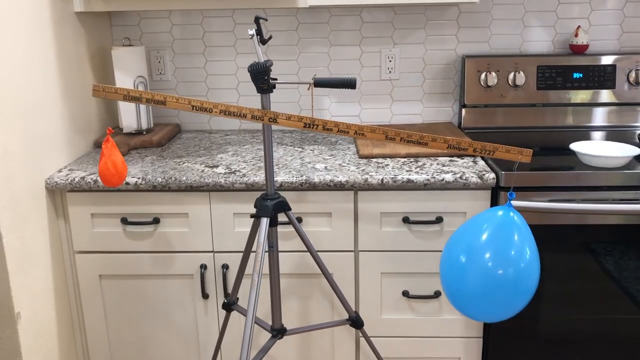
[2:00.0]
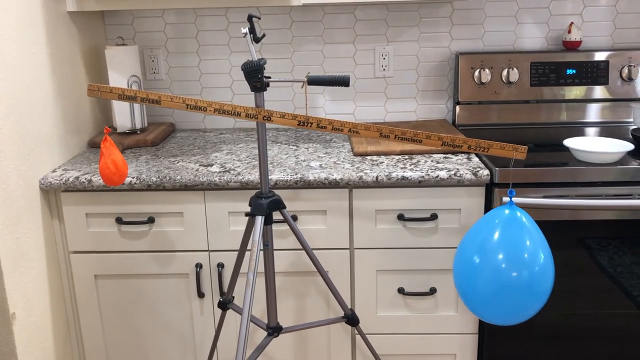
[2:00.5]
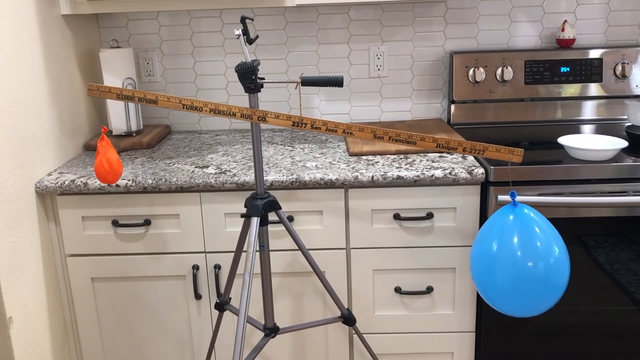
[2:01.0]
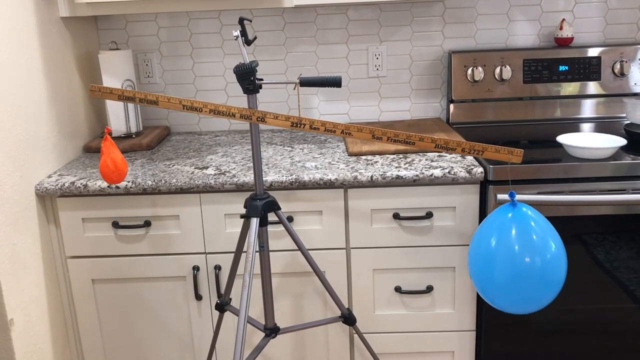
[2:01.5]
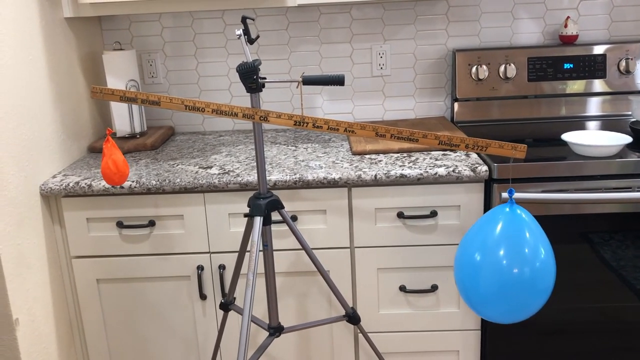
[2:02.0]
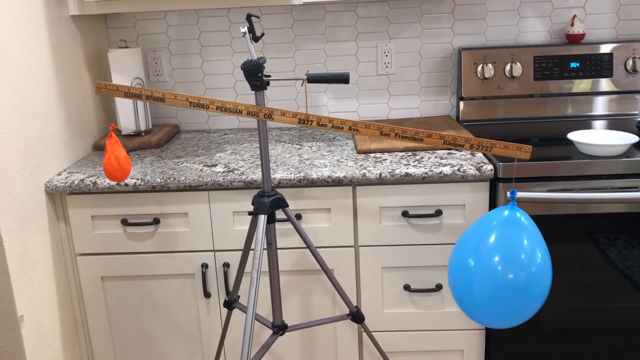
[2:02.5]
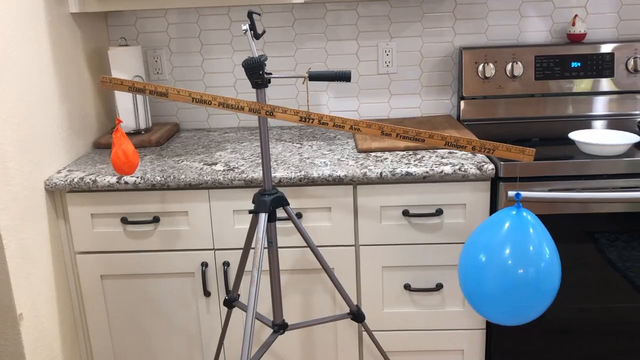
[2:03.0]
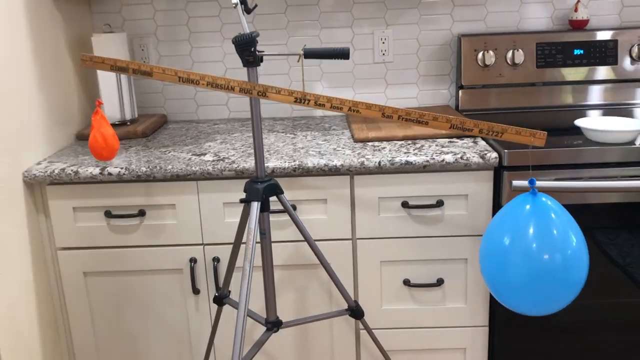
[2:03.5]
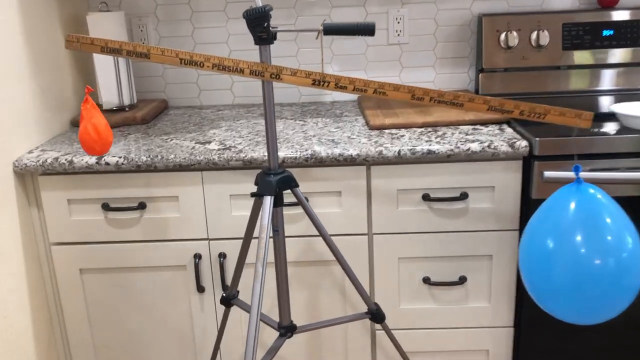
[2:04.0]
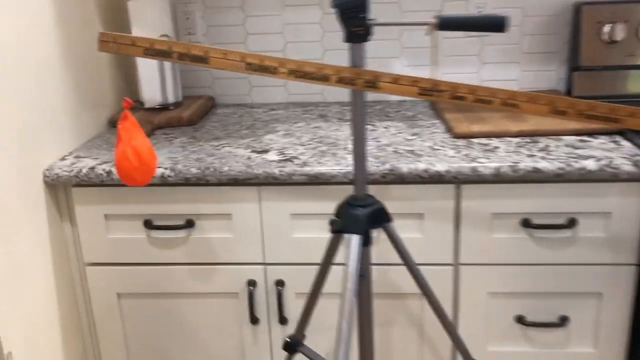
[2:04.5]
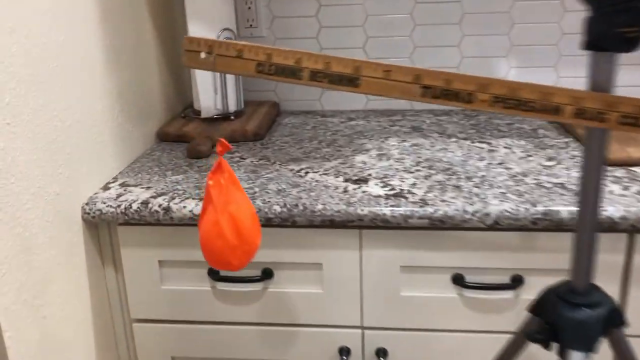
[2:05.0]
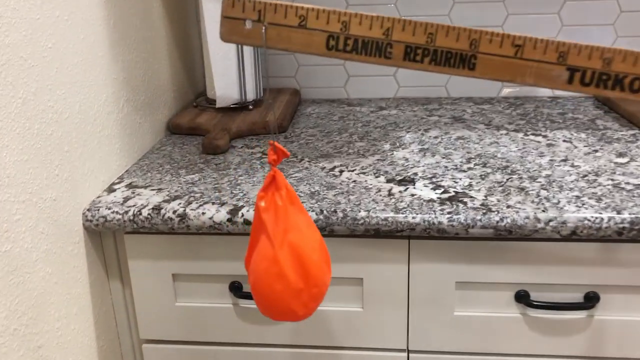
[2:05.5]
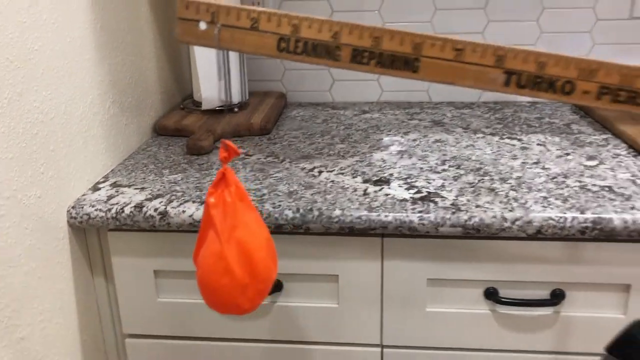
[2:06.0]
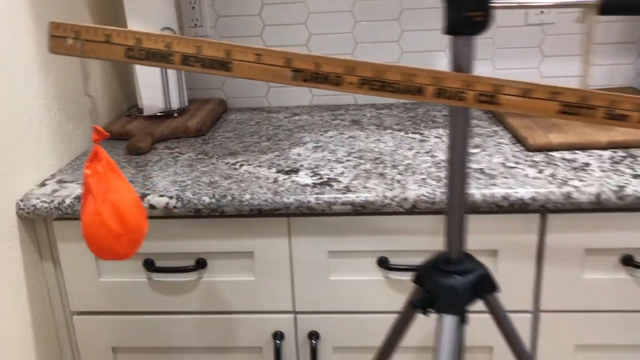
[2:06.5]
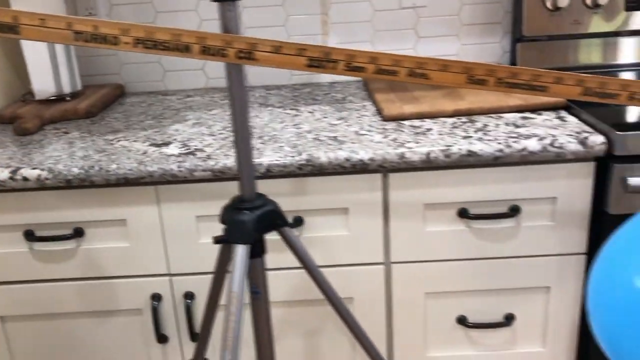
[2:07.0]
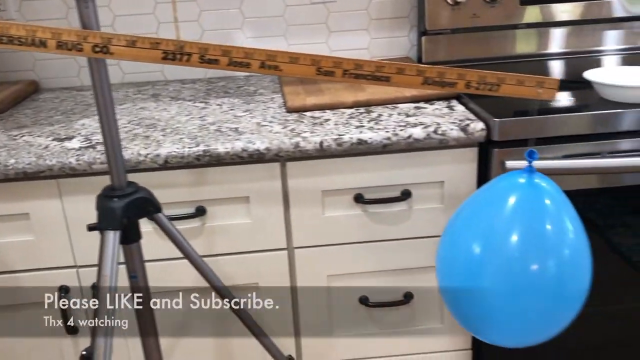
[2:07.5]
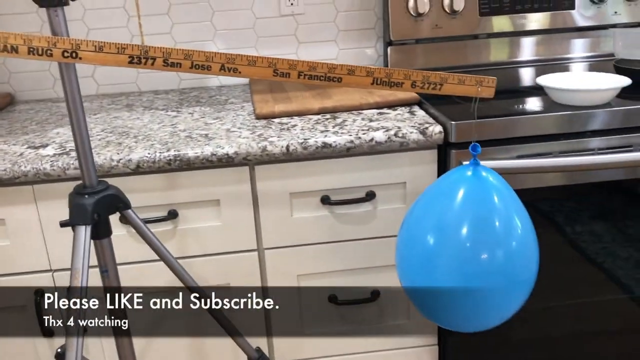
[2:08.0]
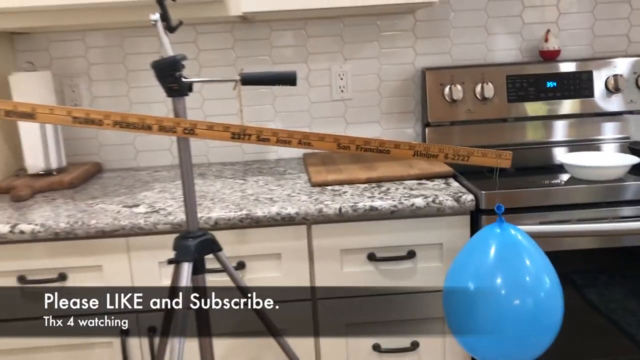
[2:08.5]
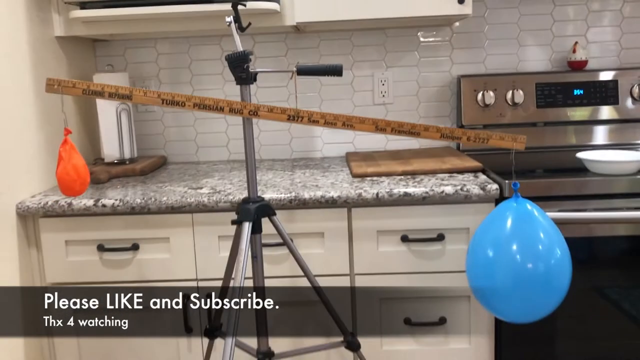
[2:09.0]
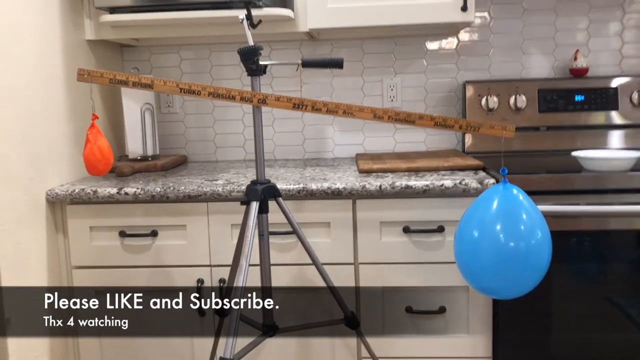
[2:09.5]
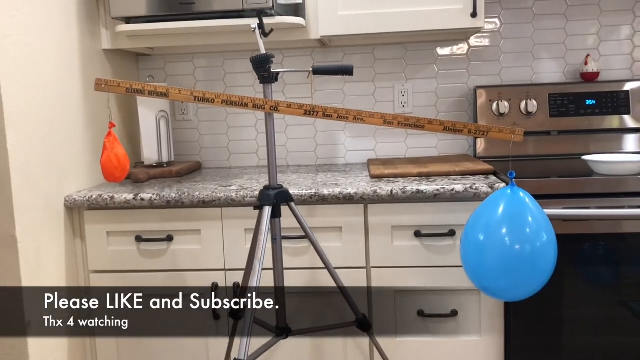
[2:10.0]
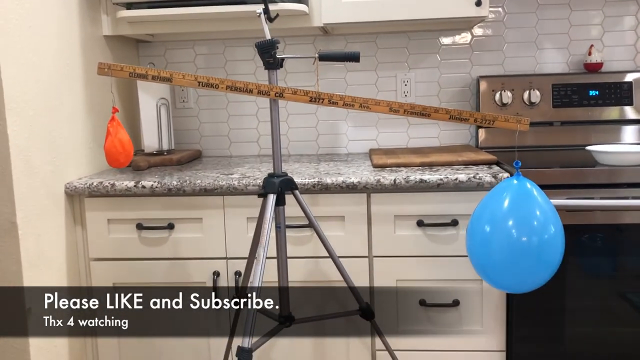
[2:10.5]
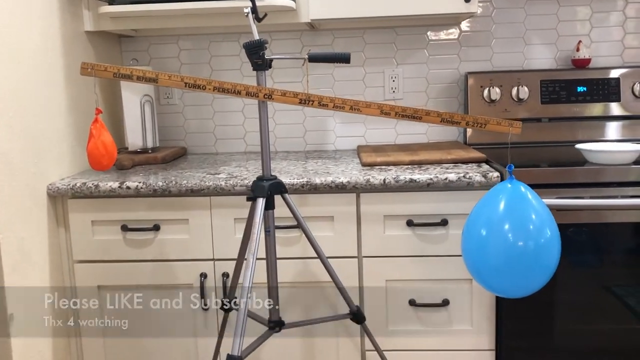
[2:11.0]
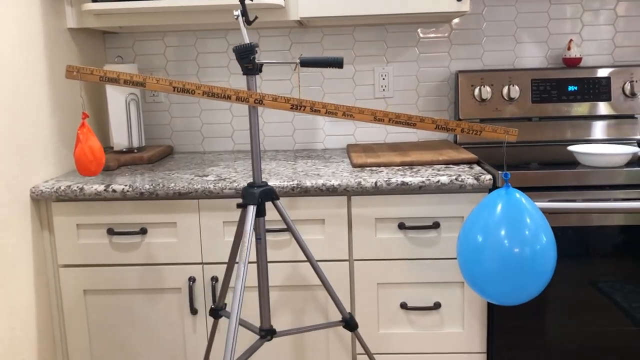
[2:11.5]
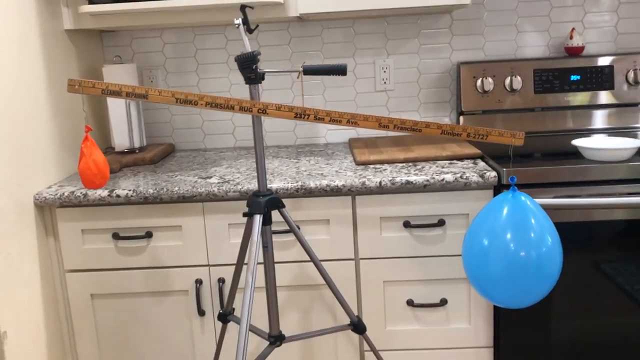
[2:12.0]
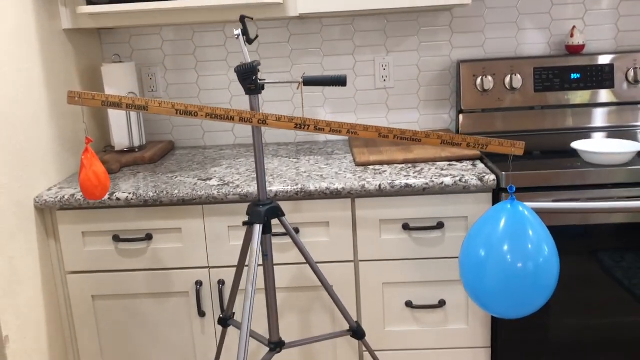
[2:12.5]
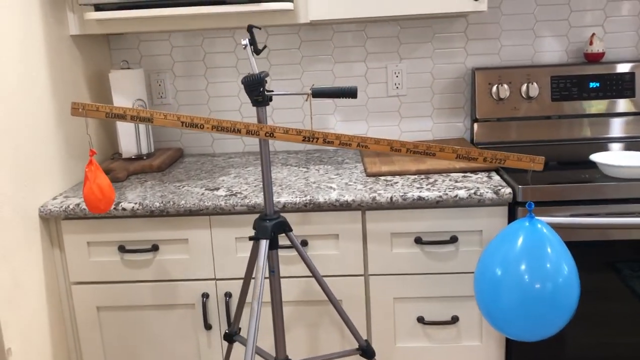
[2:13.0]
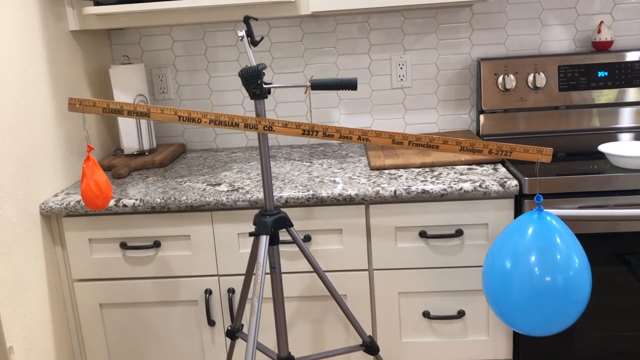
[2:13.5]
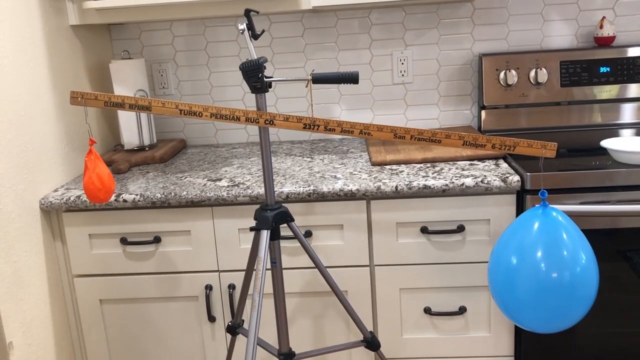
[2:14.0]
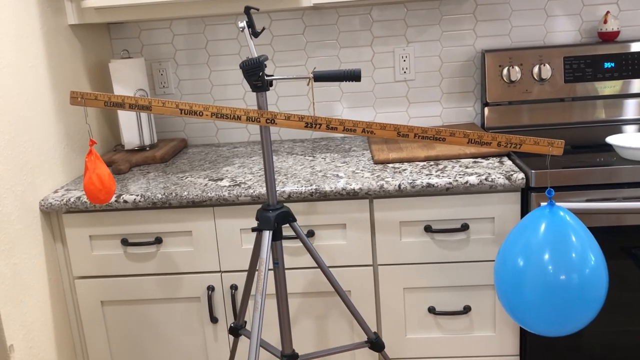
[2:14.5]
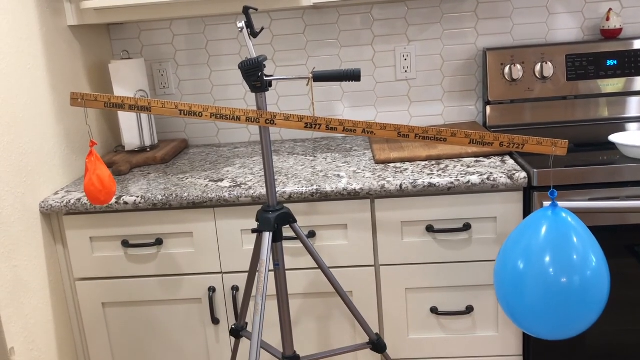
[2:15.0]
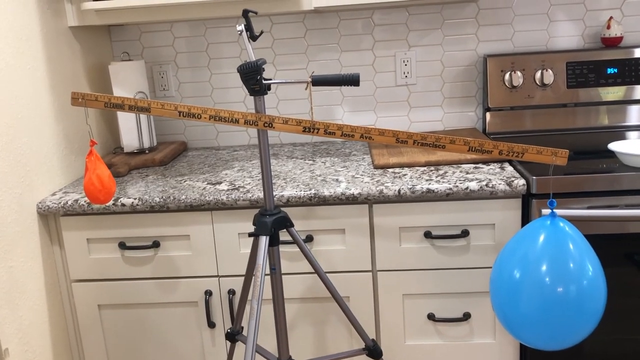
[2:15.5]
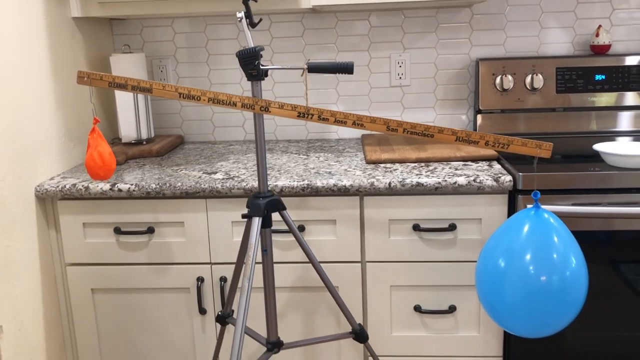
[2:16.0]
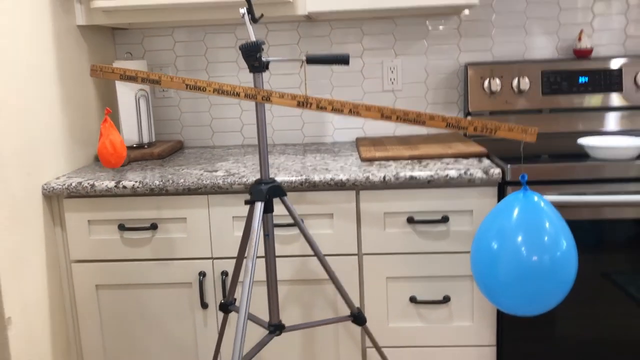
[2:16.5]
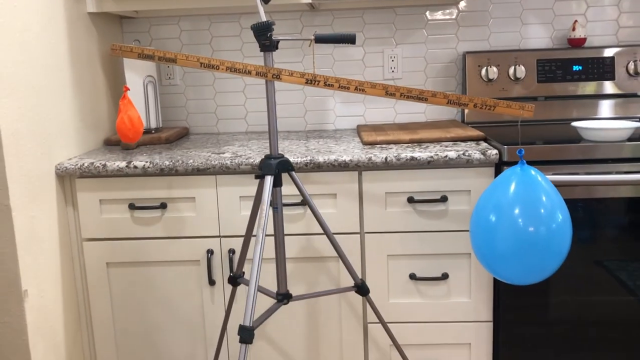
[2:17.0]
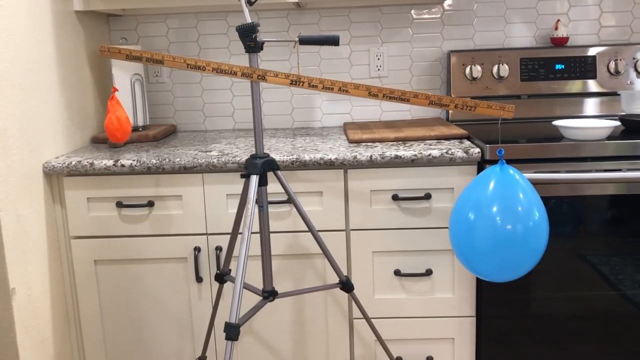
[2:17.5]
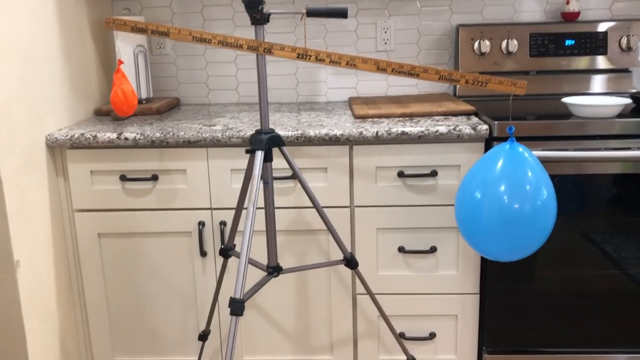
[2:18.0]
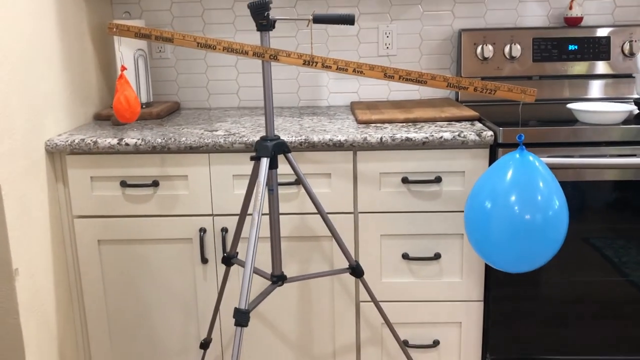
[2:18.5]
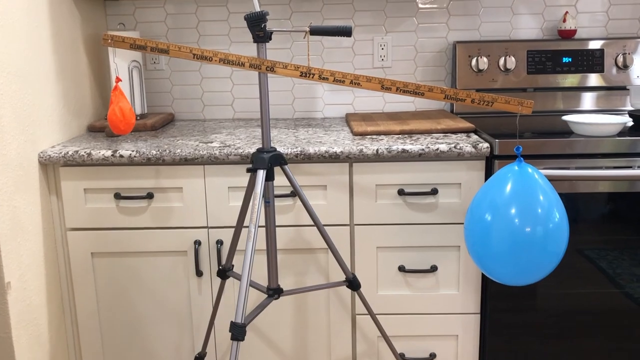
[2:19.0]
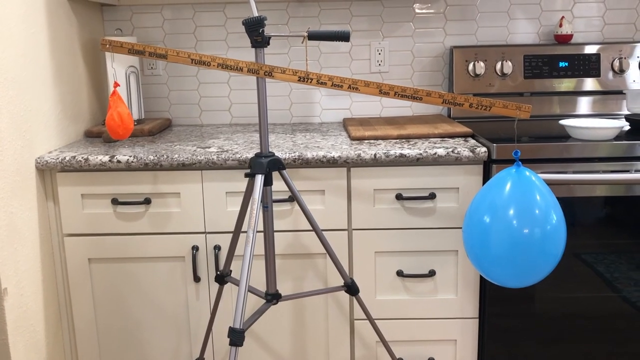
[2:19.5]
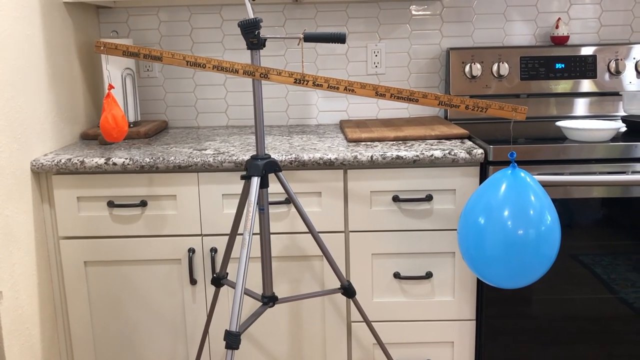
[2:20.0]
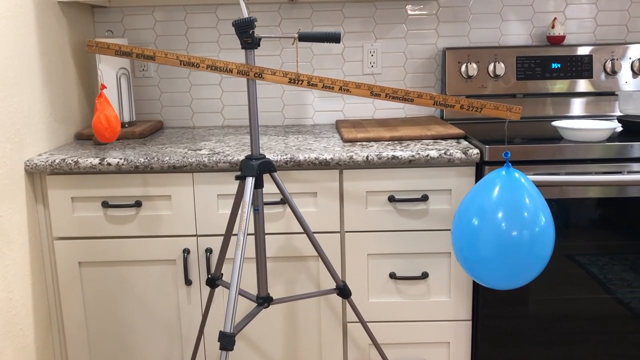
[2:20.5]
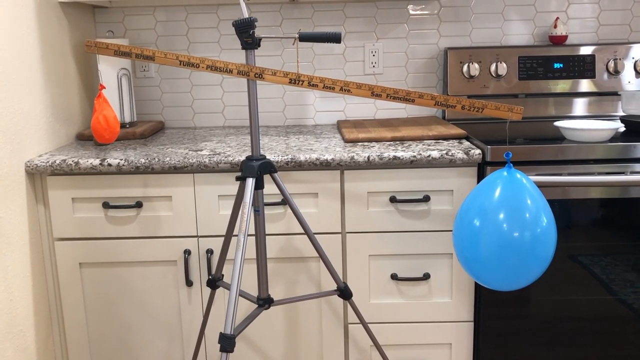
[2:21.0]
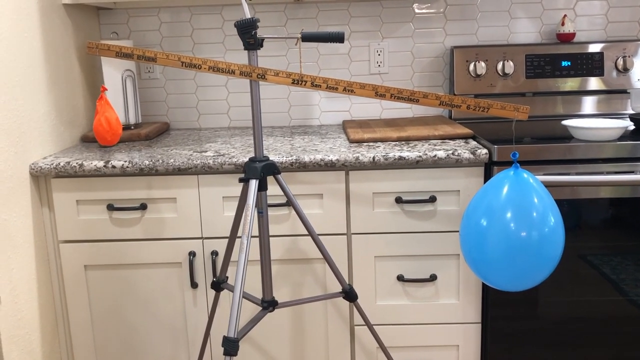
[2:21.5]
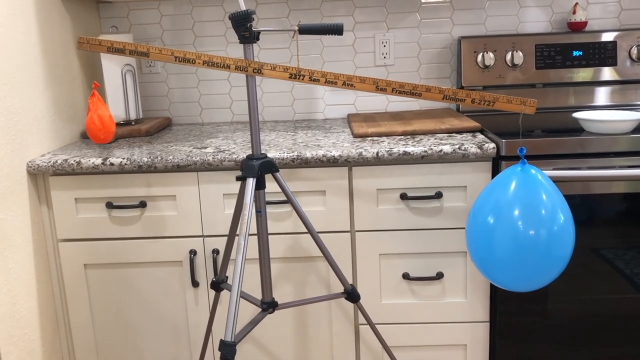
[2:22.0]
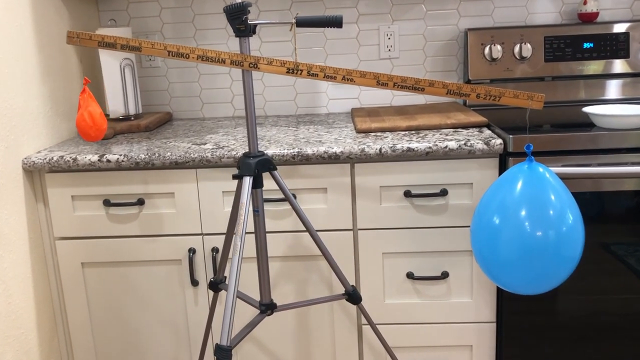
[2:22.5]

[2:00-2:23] The blue balloon's side has moved down into a pretty good slant, the right side probably about two inches above the counter and the left side about six inches above it. The blue balloon is still completely full, with some light reflecting off it, while the orange balloon on the left is almost completely deflated. The blue balloon moves back and forth as the air in the room circulates, and the ruler barely moves up and down. The camera zooms in close on the orange balloon, which is almost completely empty, moves over to the right balloon, then returns to a wide view, where the blue balloon is slanted quite a bit lower than the balloon on the left. The camera moves in and out a little and shakes slightly. A little more text goes across the bottom, and the view focuses on the balloons, with the right side lower than the empty one on the left.